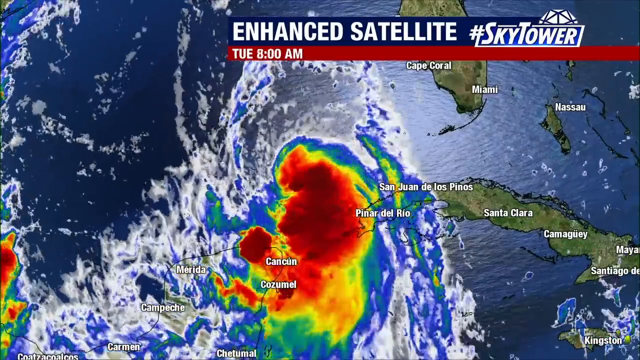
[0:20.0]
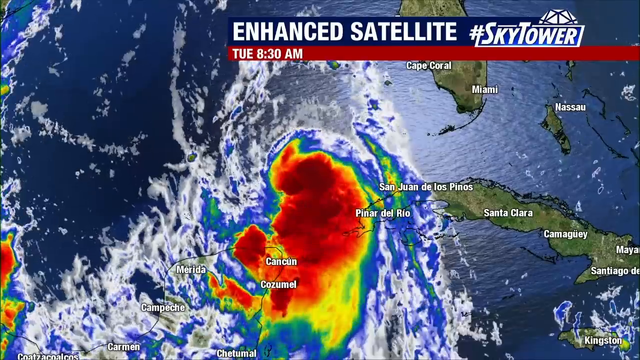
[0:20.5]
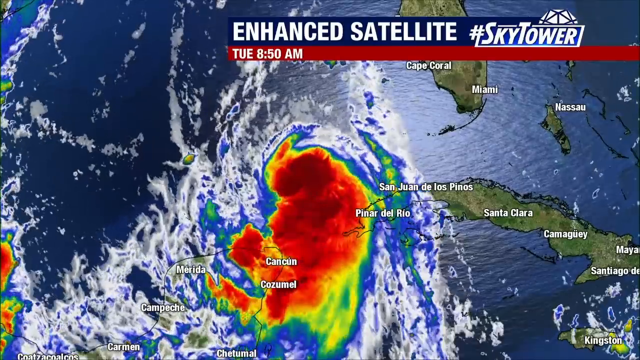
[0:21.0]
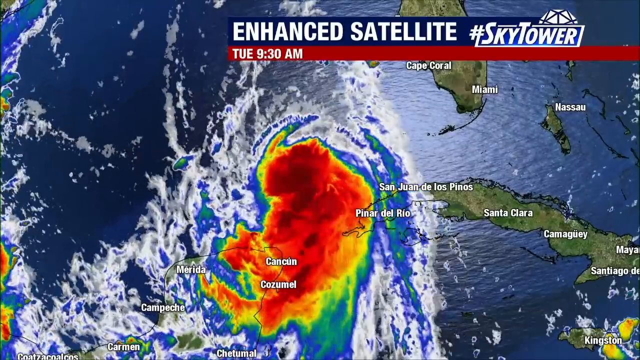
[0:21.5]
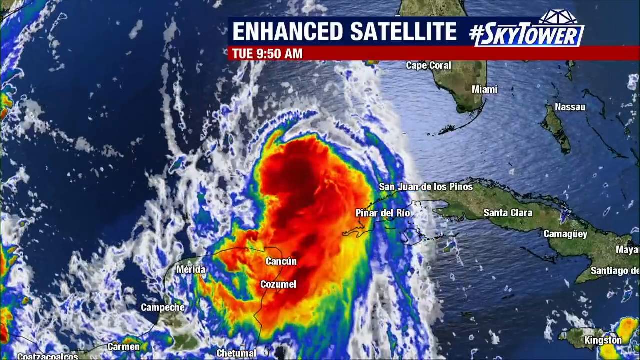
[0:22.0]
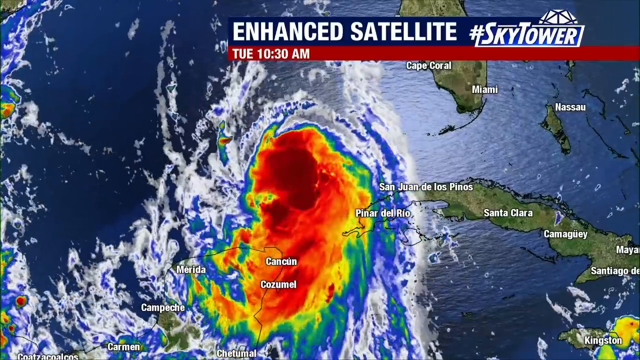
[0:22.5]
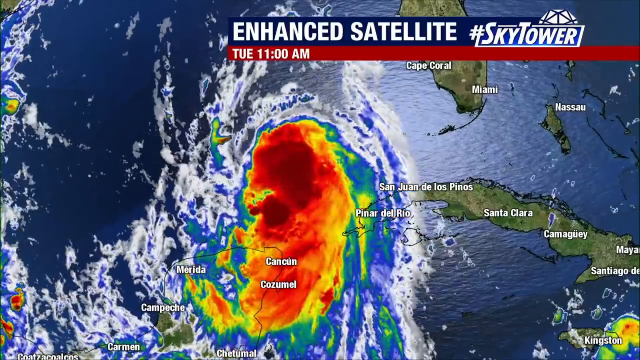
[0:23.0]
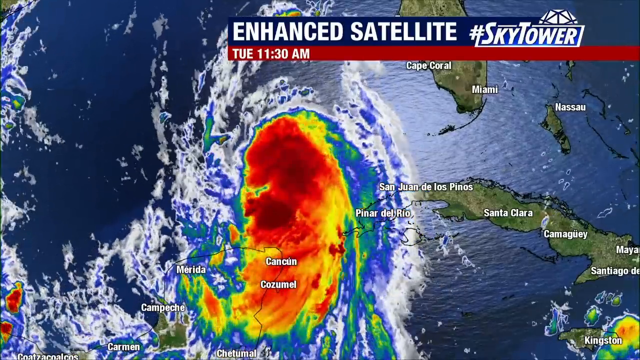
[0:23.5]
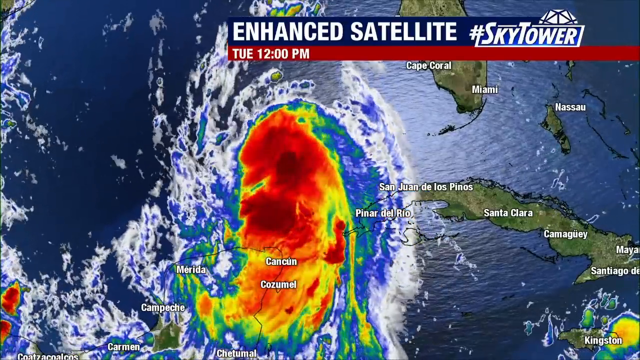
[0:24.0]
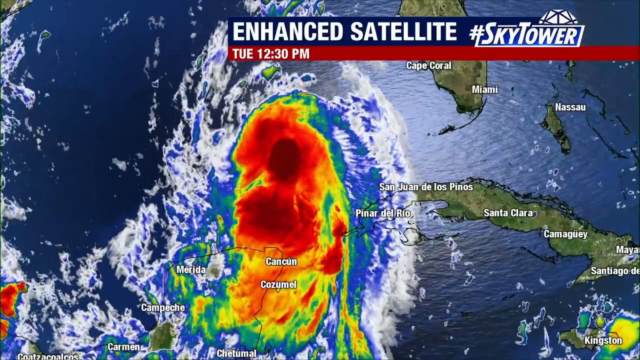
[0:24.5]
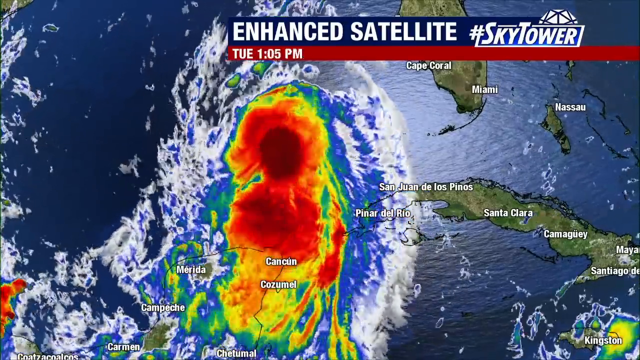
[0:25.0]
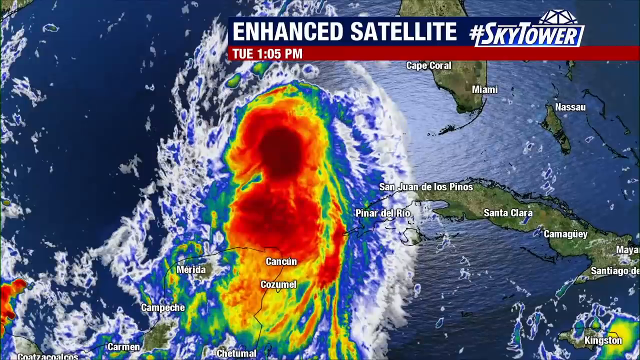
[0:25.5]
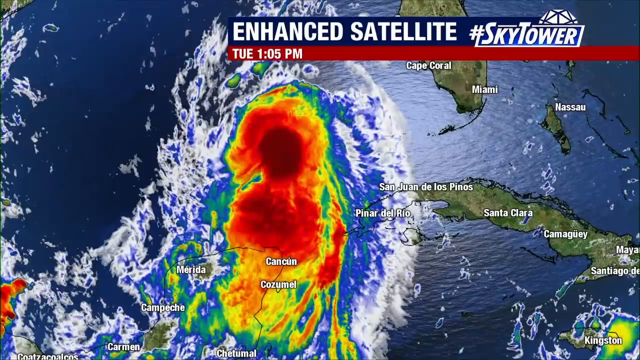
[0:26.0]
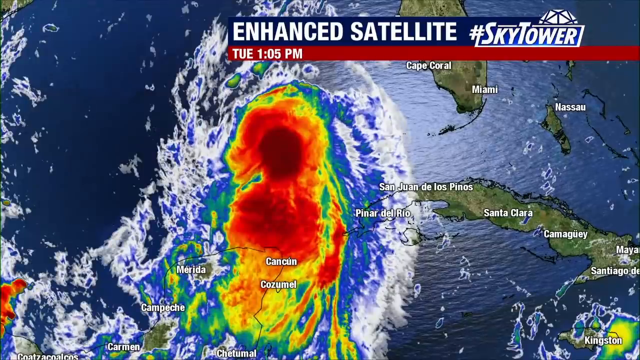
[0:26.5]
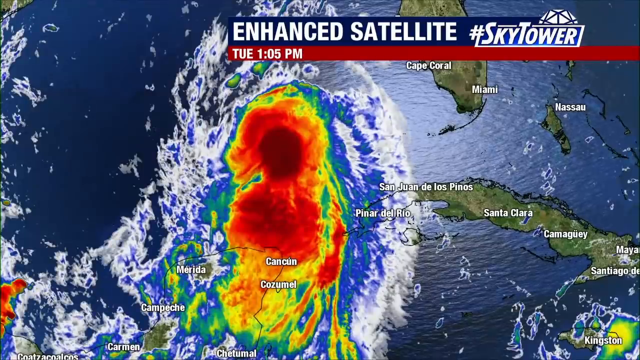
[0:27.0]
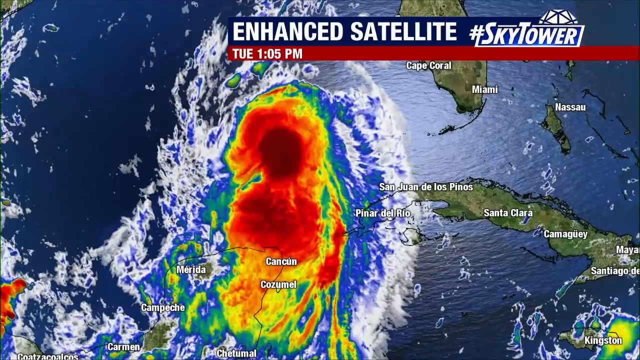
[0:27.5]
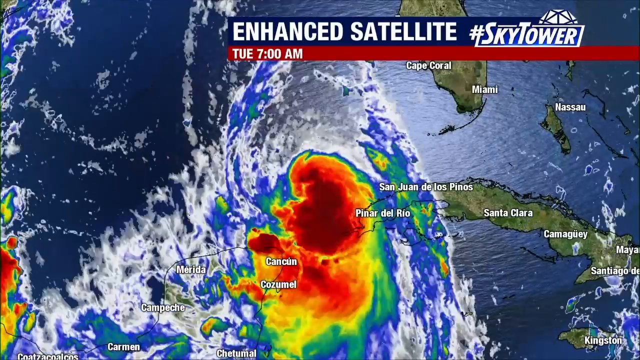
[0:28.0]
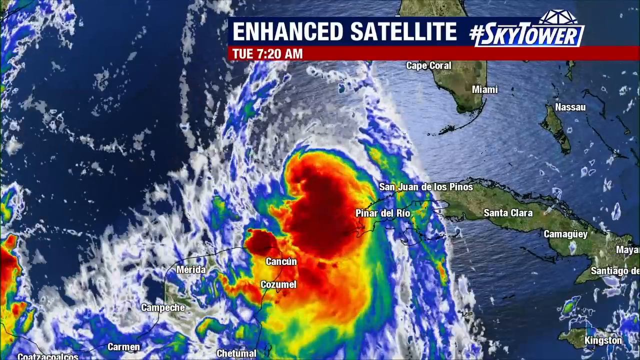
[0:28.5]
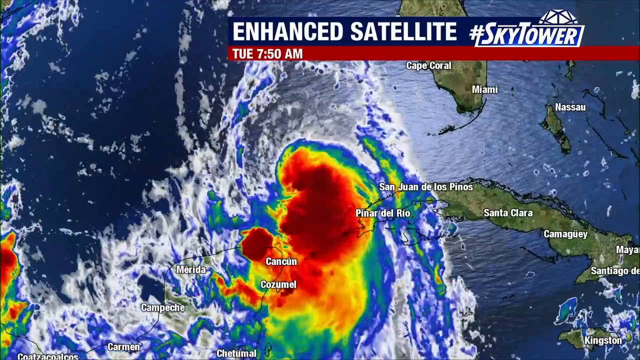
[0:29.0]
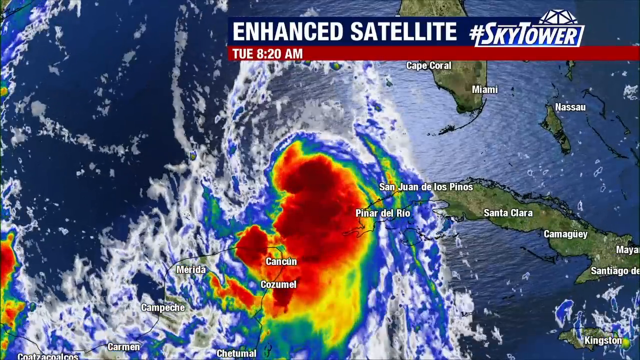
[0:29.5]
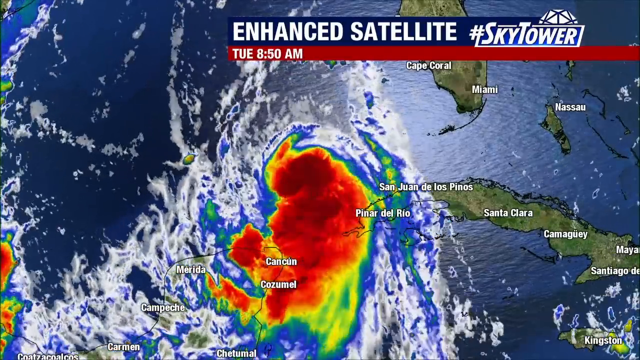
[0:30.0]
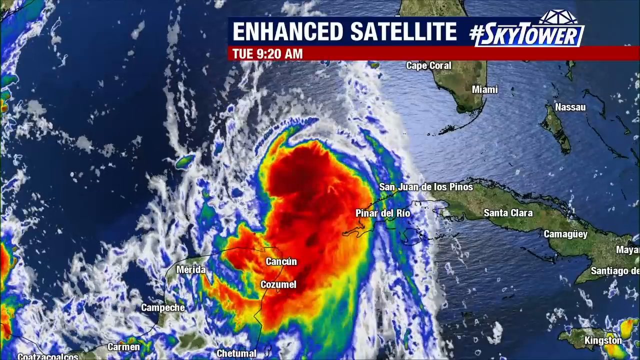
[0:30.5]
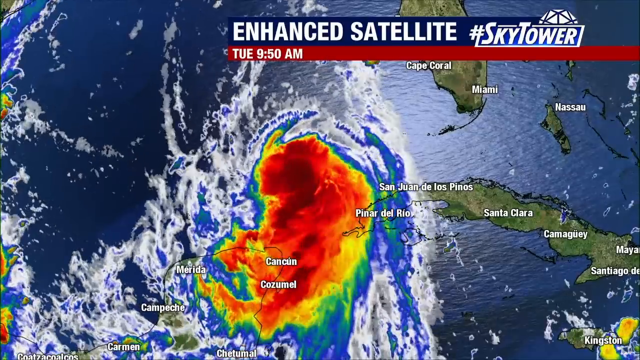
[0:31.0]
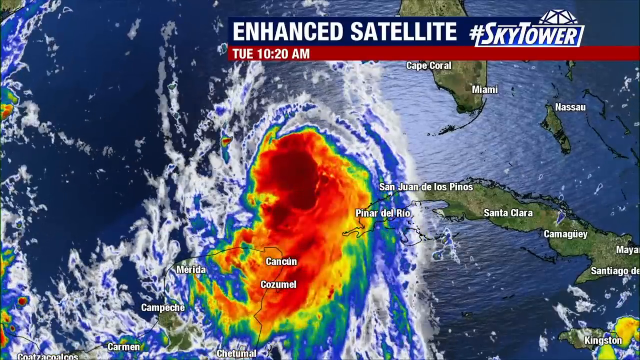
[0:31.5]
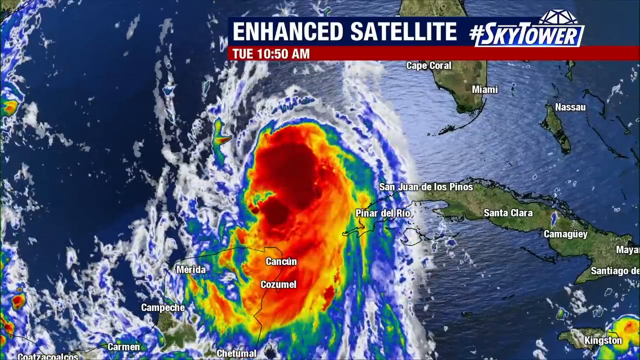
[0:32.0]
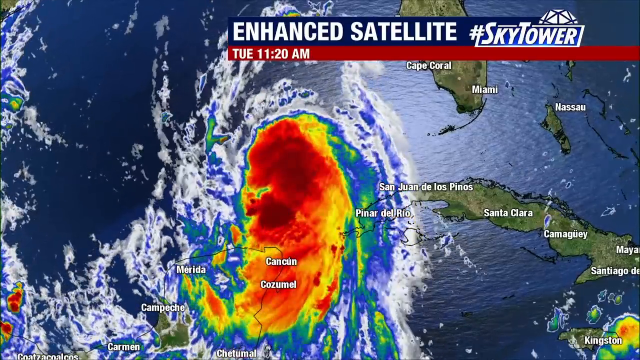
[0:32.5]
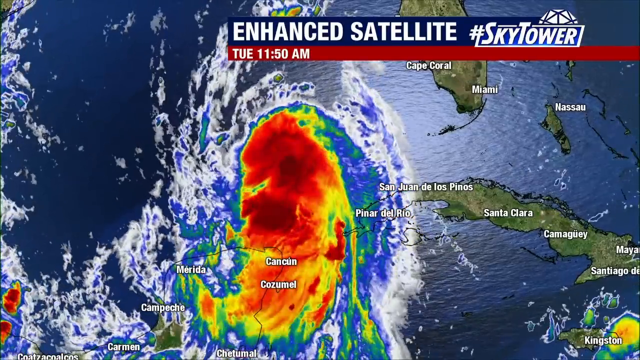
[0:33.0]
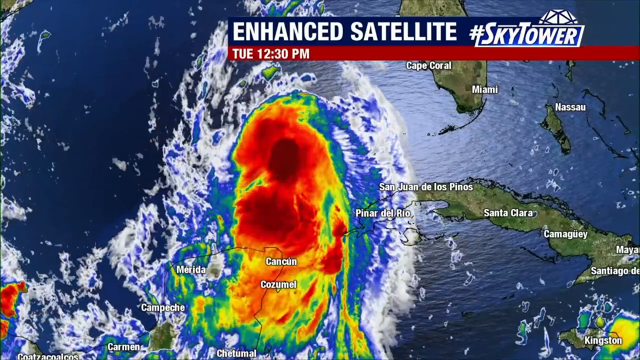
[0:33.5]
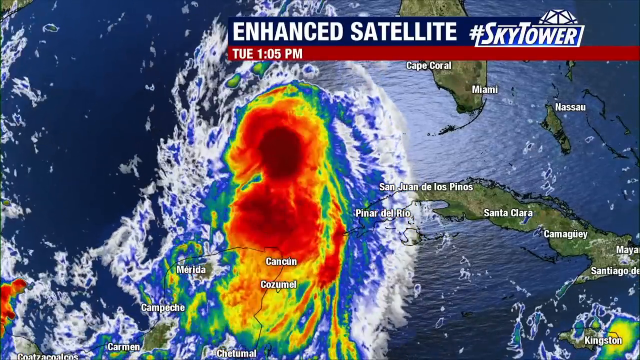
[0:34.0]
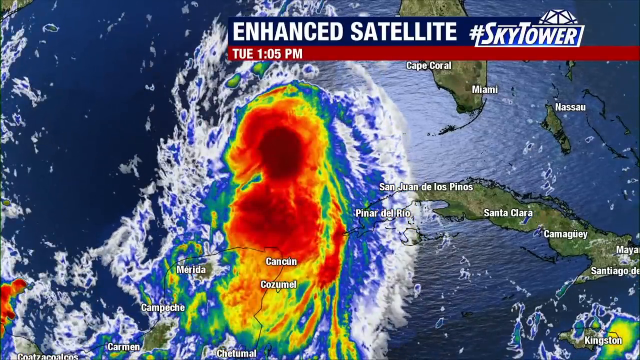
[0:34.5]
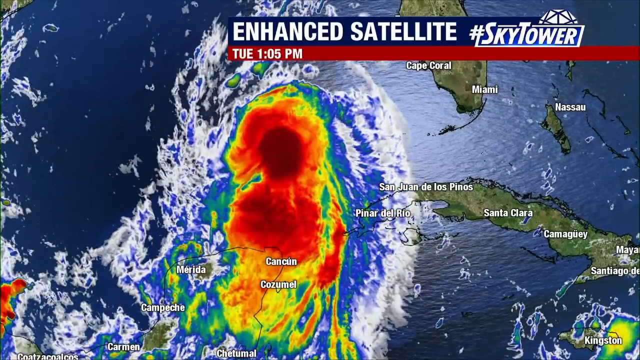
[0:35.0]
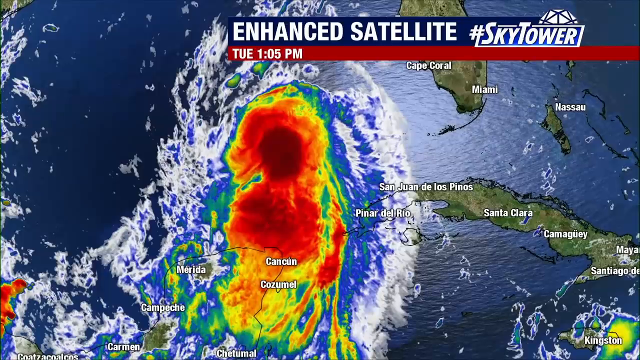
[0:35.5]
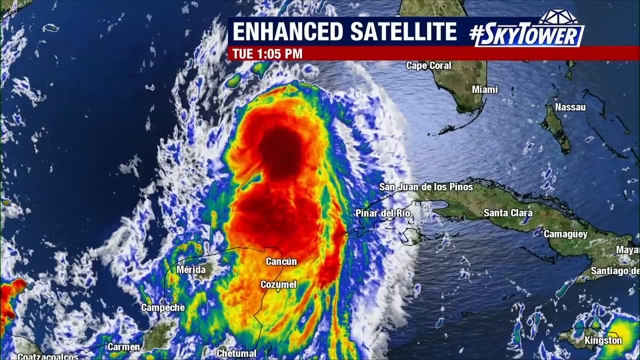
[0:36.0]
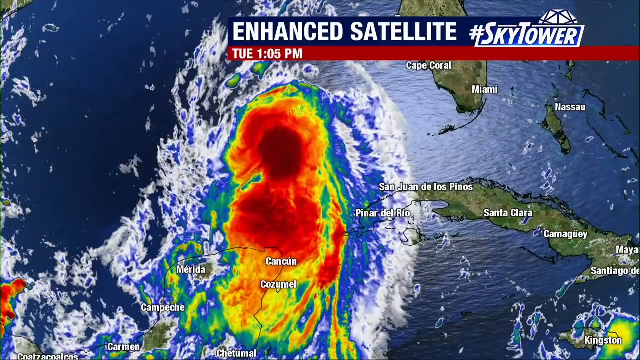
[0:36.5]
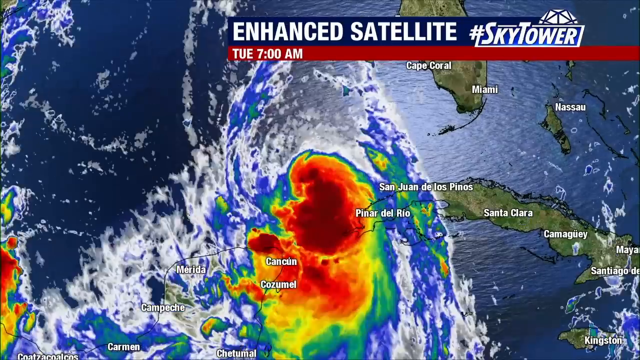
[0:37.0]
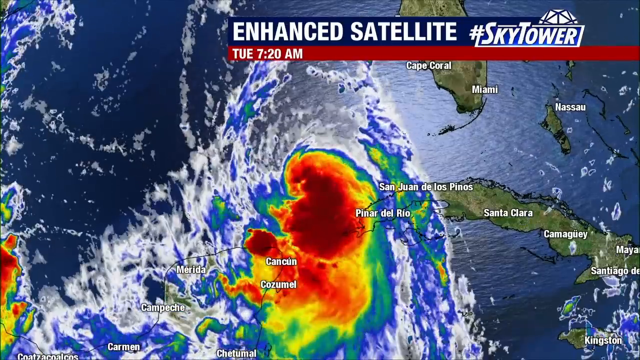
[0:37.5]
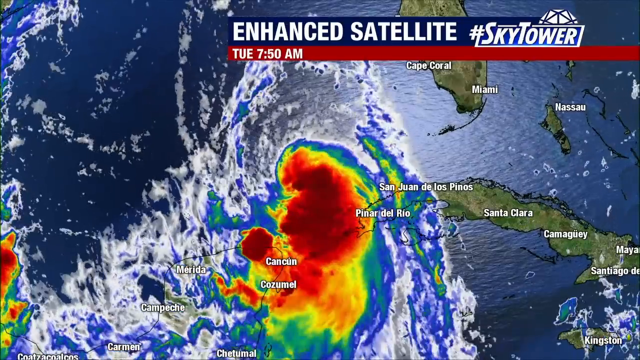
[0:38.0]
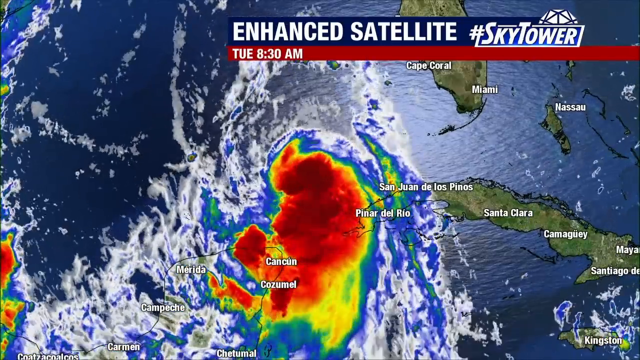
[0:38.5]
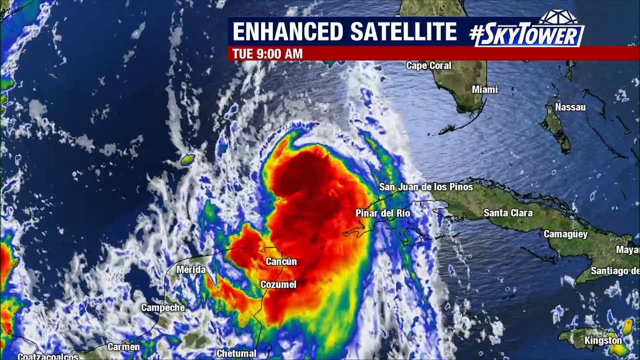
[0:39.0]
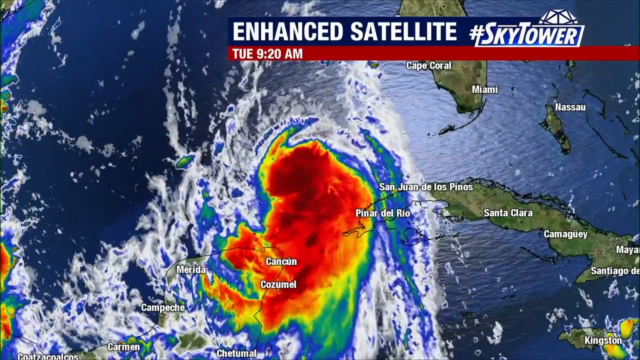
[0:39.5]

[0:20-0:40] The same "Enhanced satellite Sky Tower" map now moves forward to Tuesday at 8 PM, and red areas are over Cancun and Cozumel. The storm is still spinning, and as it spins the red spreads out, which may suggest the storm is intensifying. It is moving to the west rather than the east, so it does not appear to be affecting the United States or Florida at this point. The areas most affected are Cancun and Cozumel, while other areas on the eastern side of Mexico are receiving rain: Chetumal is getting some, Merida is getting a little, and Pinar del Rio is getting some.